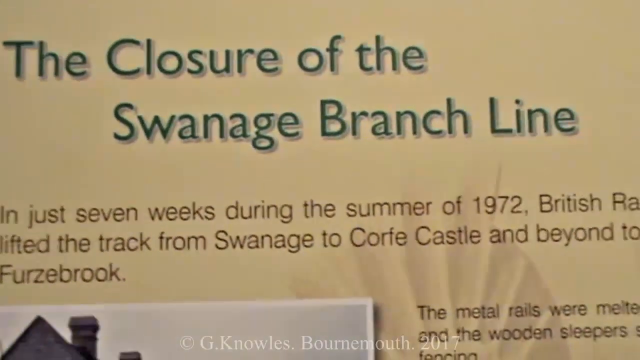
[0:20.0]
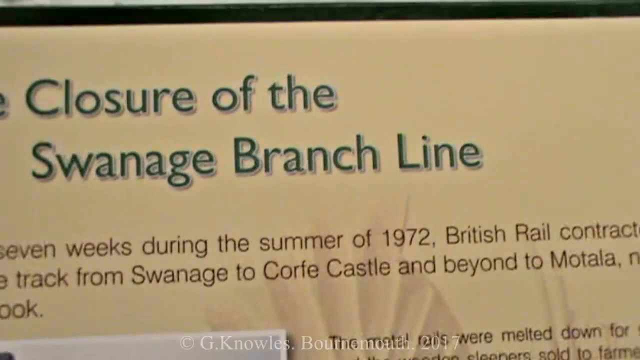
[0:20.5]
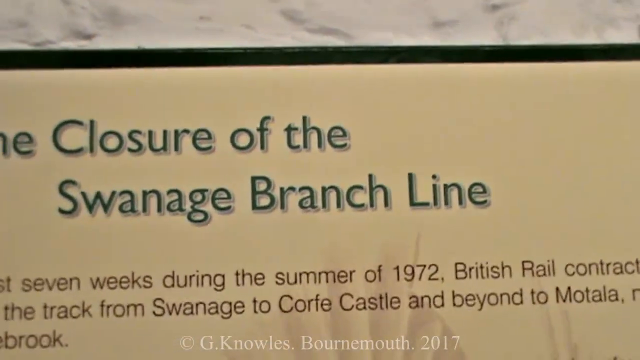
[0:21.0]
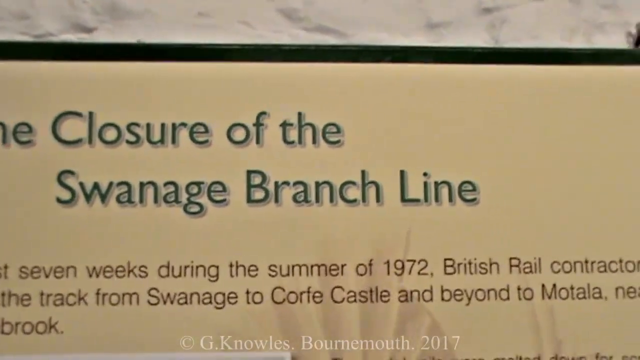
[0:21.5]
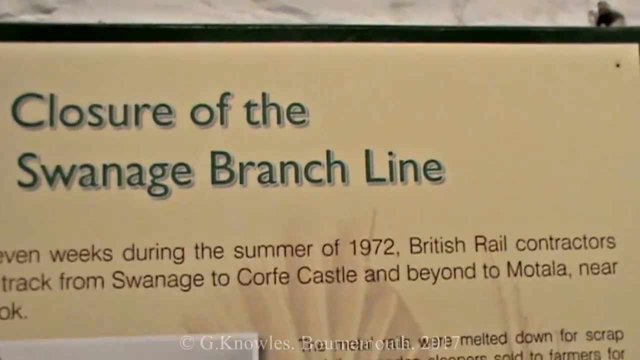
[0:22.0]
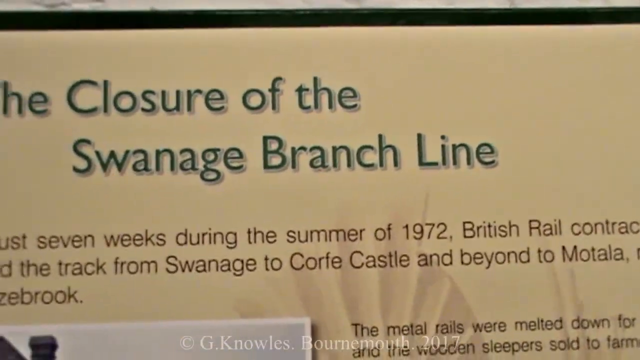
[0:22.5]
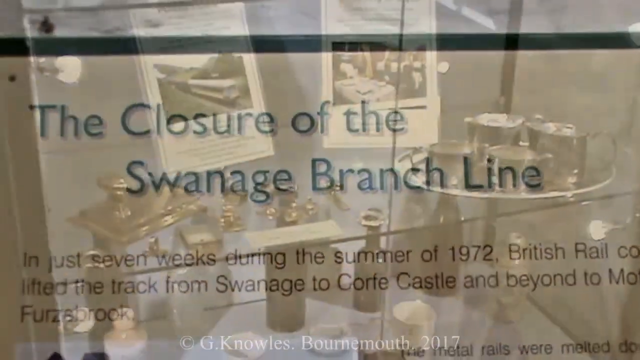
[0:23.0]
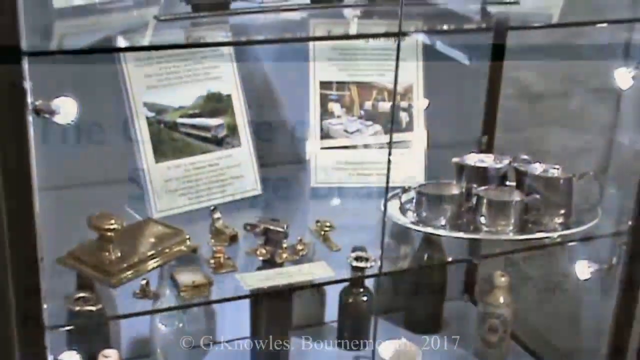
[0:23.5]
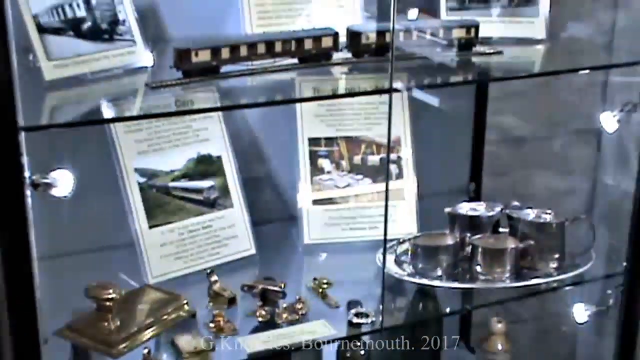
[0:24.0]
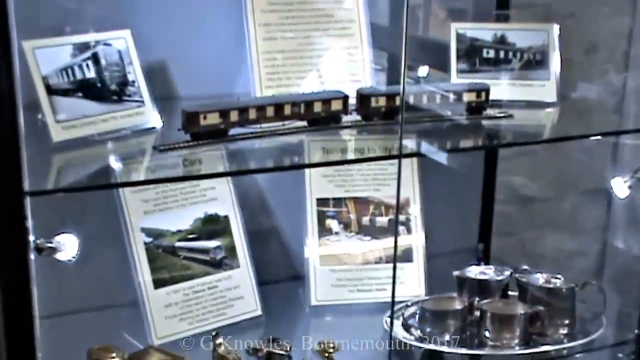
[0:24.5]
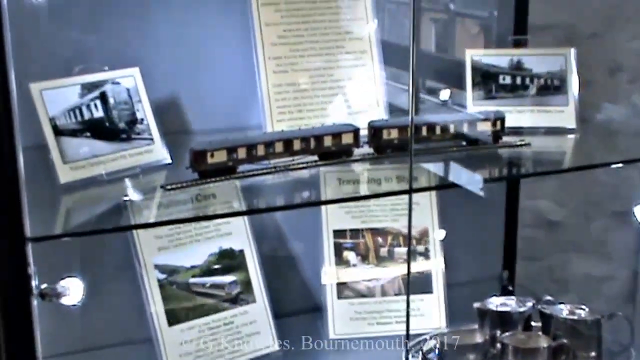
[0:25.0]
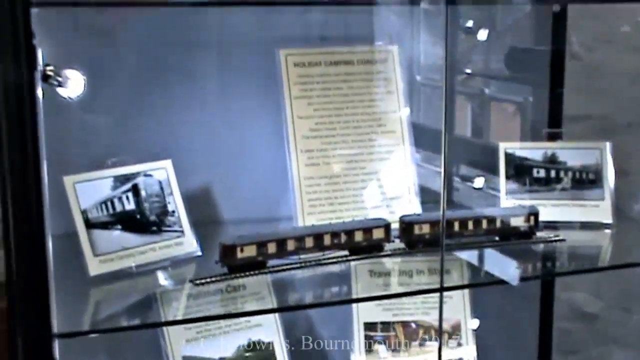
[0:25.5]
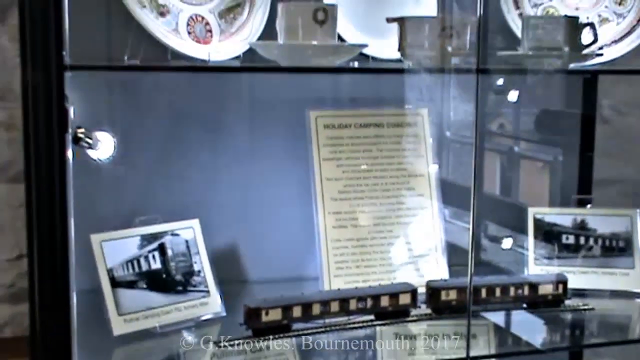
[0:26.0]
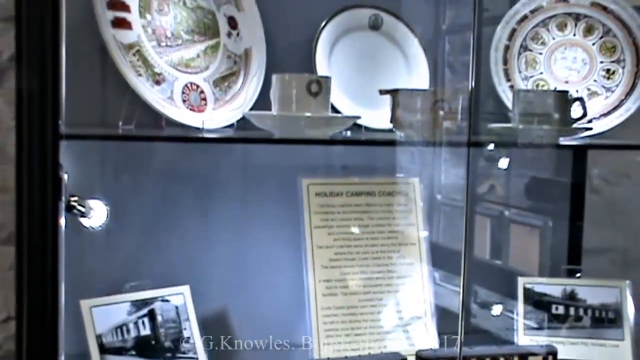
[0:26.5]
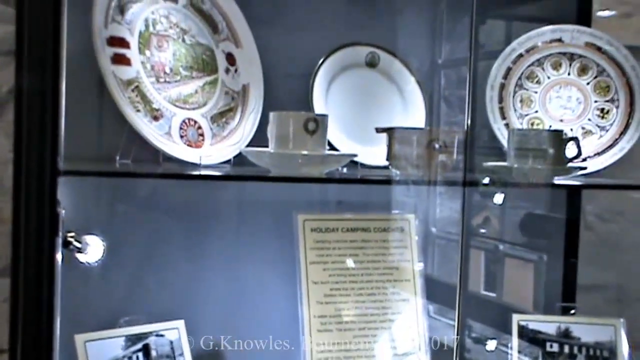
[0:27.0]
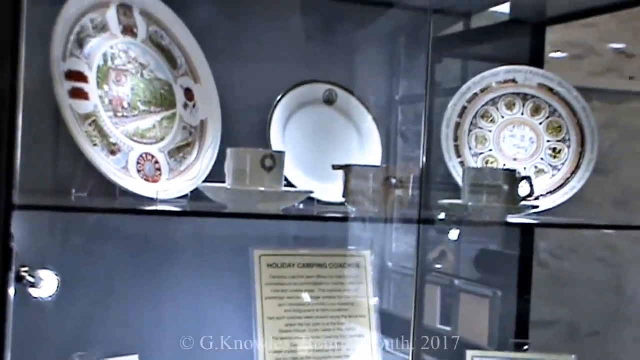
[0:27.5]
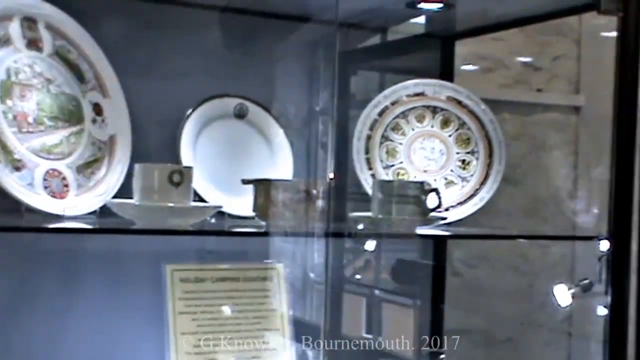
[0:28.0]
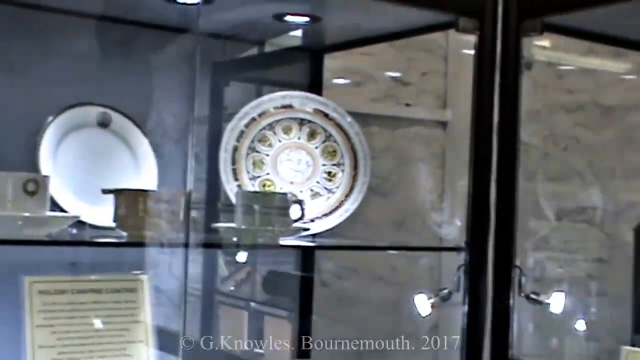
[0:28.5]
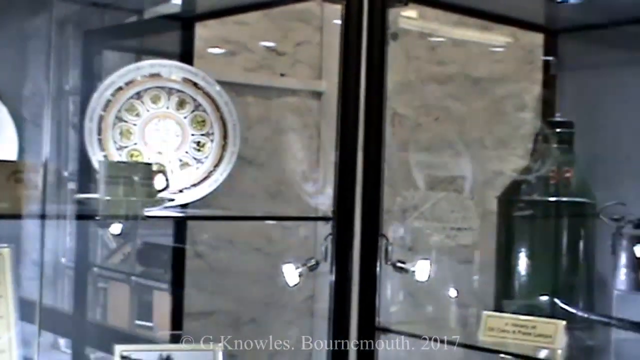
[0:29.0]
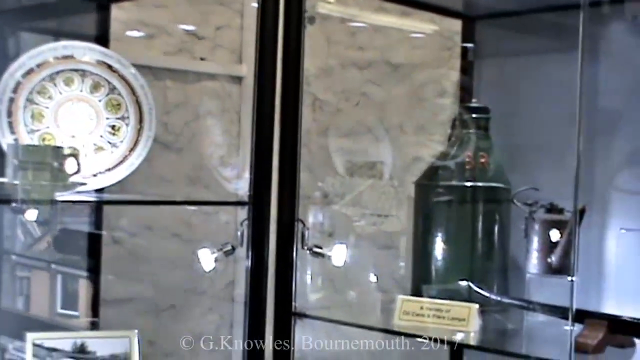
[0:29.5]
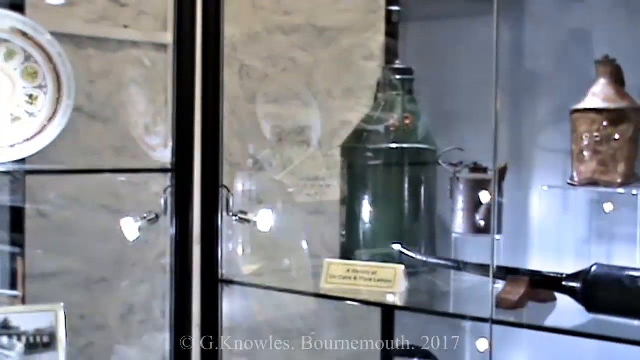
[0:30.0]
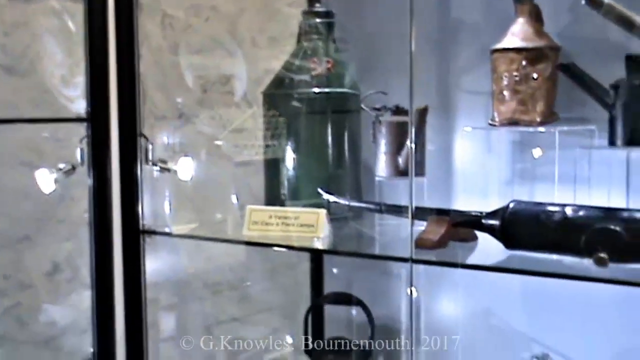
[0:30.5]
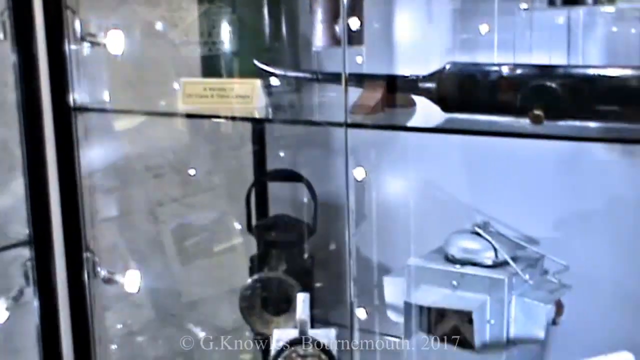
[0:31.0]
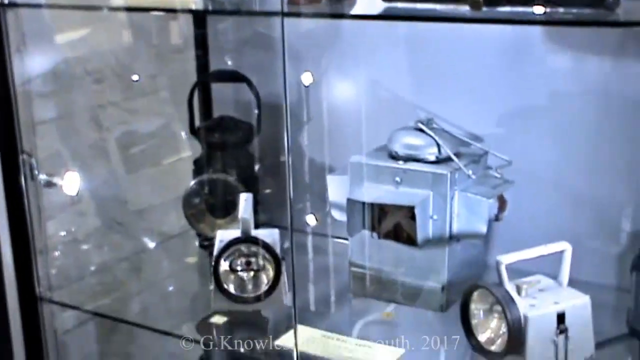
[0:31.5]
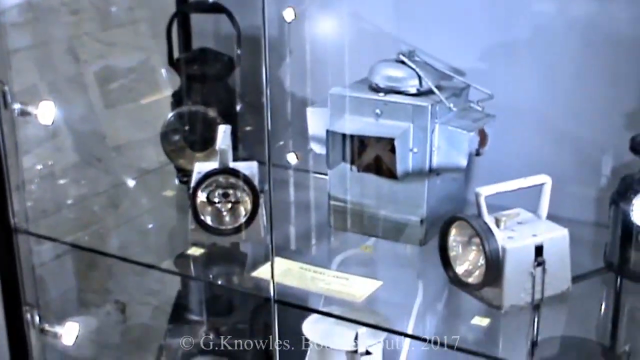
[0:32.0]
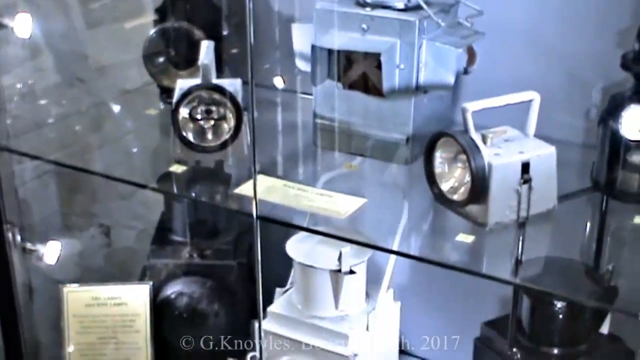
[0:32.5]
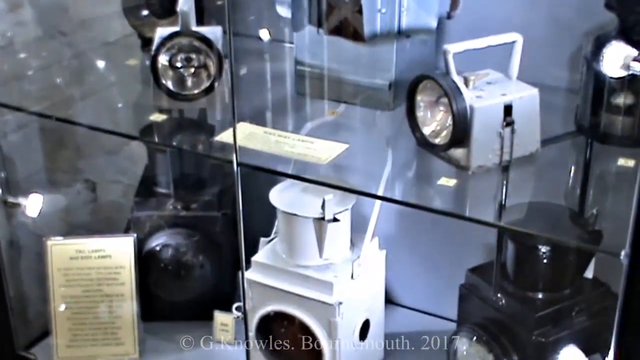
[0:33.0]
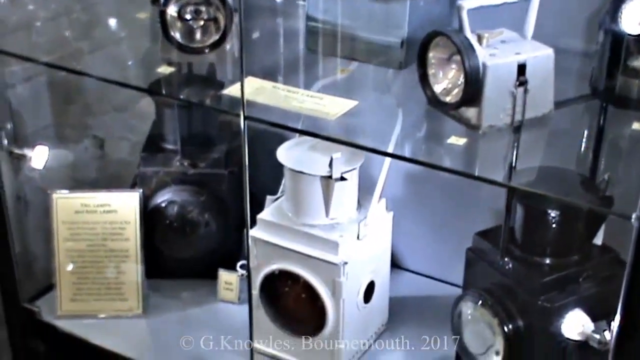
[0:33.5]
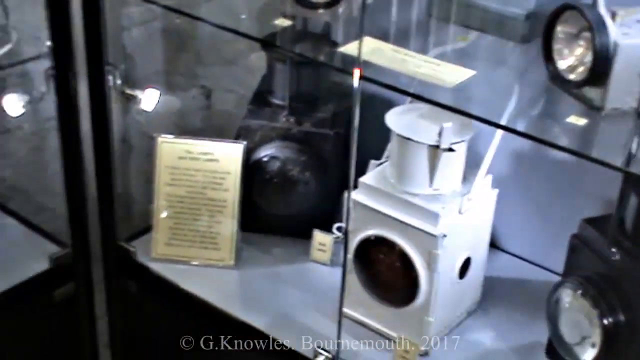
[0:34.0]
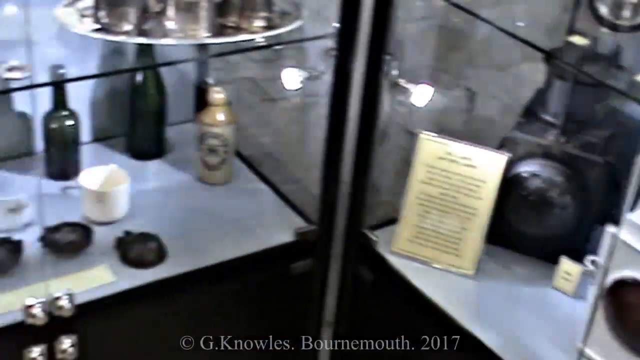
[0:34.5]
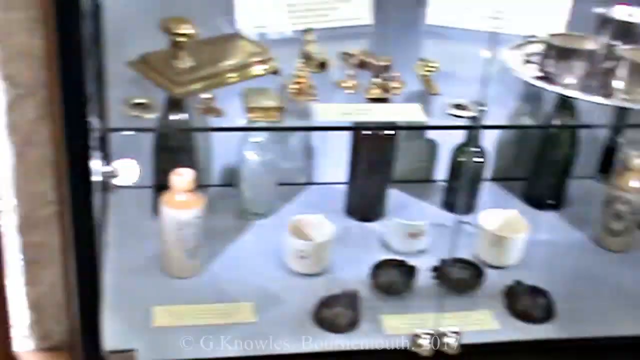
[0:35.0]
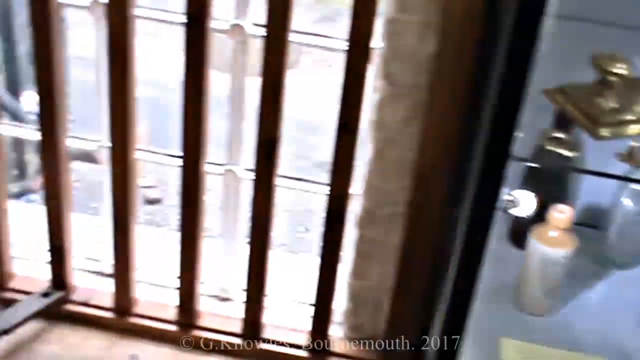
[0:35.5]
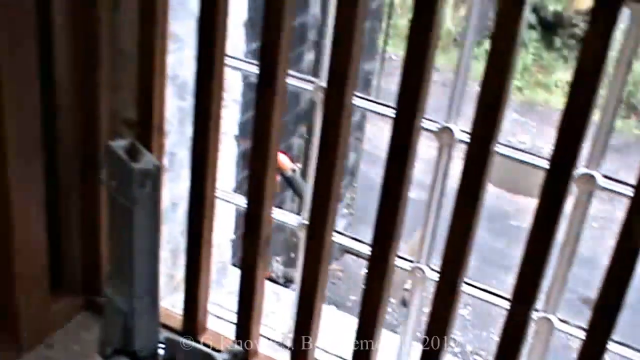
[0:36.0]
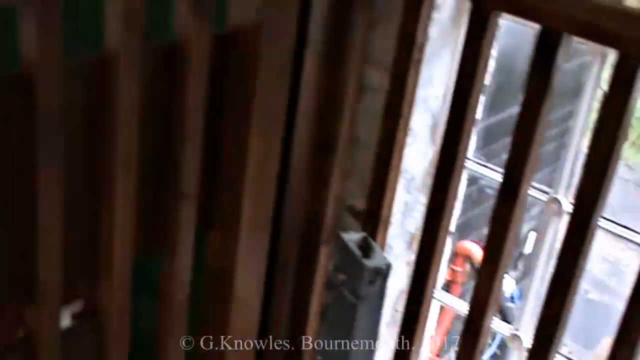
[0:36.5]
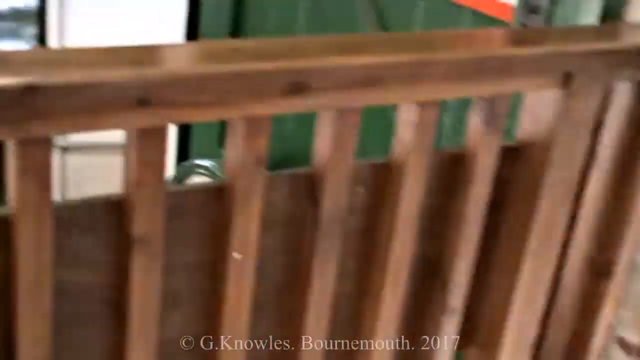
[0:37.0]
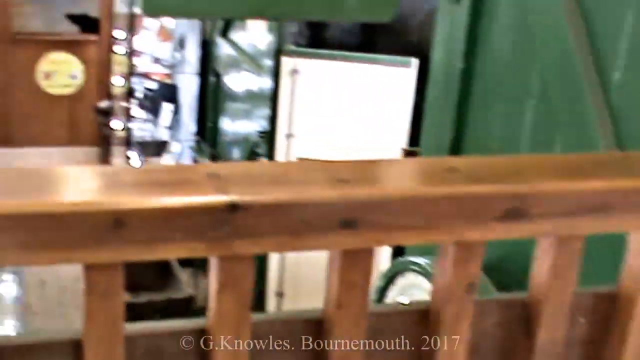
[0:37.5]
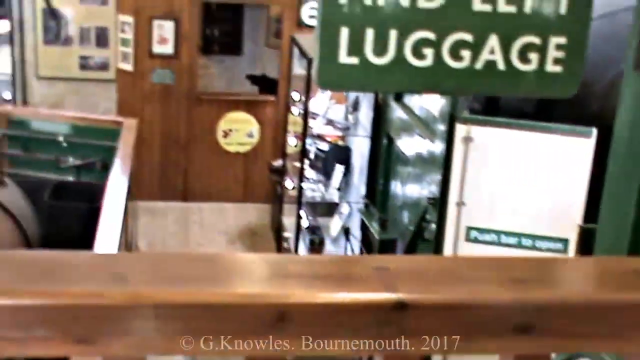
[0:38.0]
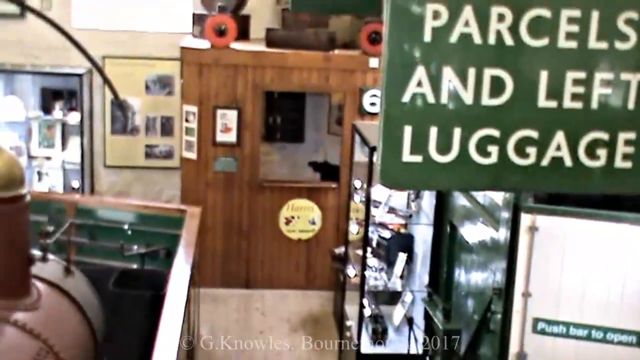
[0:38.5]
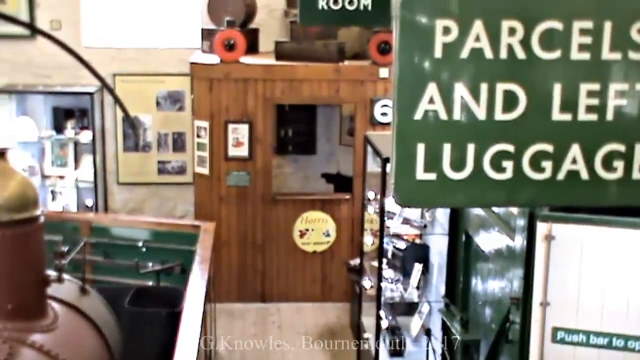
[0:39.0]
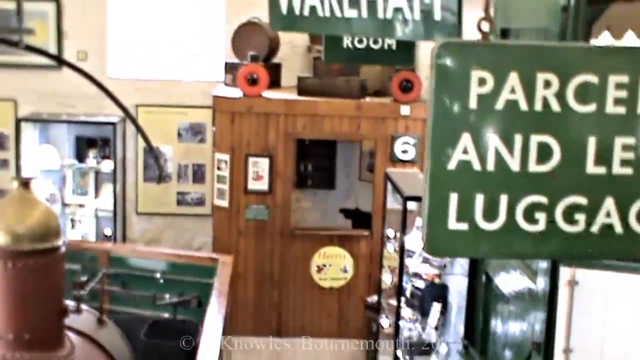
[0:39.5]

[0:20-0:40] A close-up shows one of the informational posters, which reads "the closure of the Swanage branch line." A display case holds various objects: a light, some plates, some bottles, some golden-looking objects, and a model train. Next is an old-style sign reading "parcel and left luggage," and another sign at the top reads "Wareham"; these appear to be old signs from the train line itself, kept on display. Text mentions seven weeks during the summer of '72 in connection with the closure of the line.